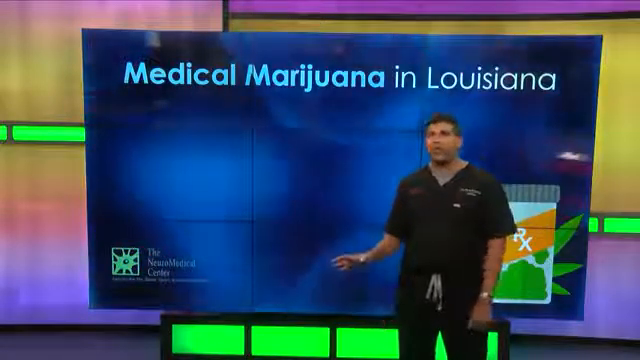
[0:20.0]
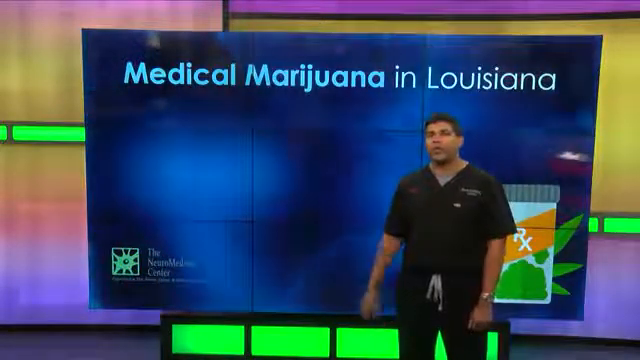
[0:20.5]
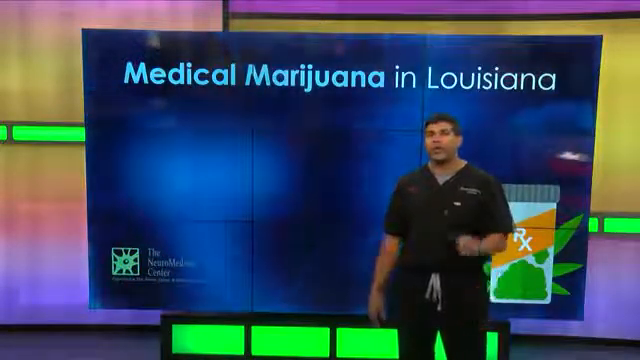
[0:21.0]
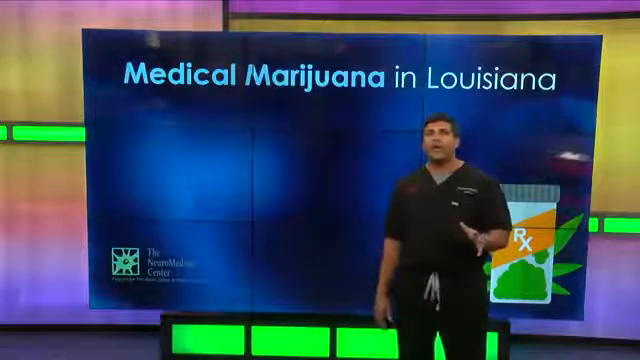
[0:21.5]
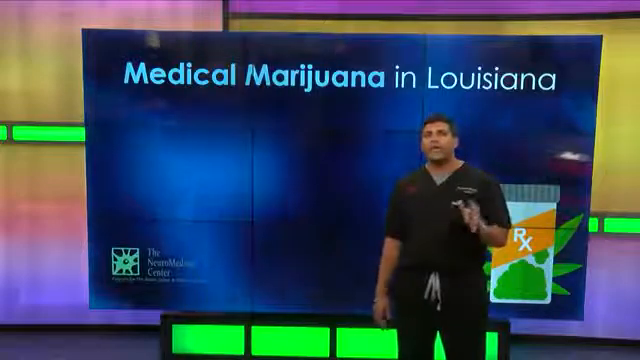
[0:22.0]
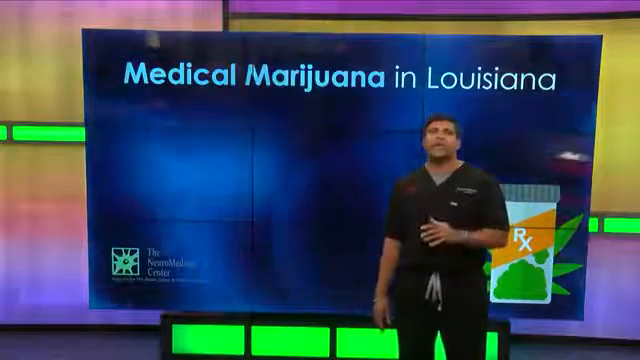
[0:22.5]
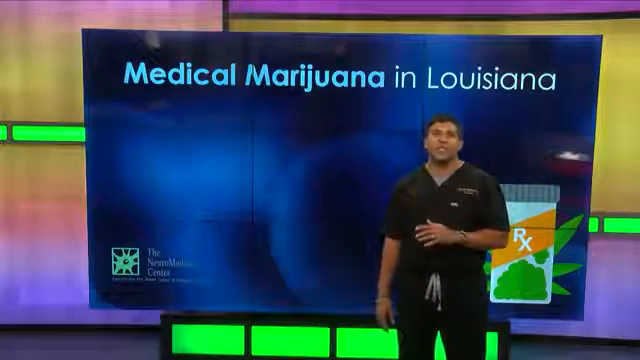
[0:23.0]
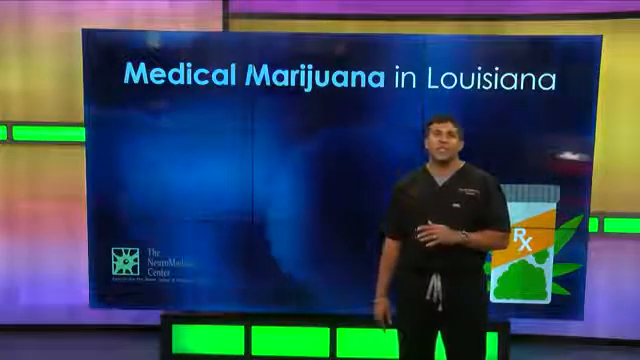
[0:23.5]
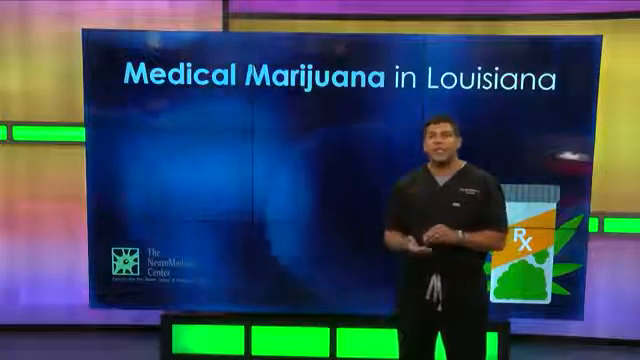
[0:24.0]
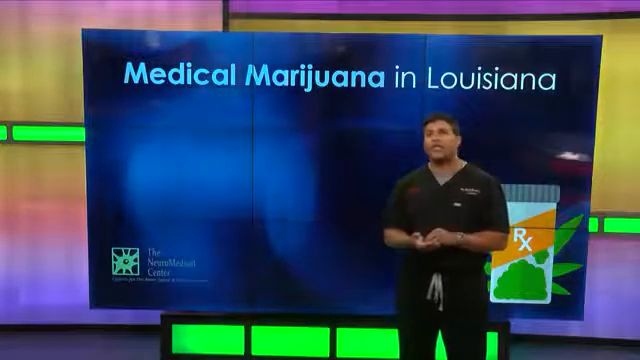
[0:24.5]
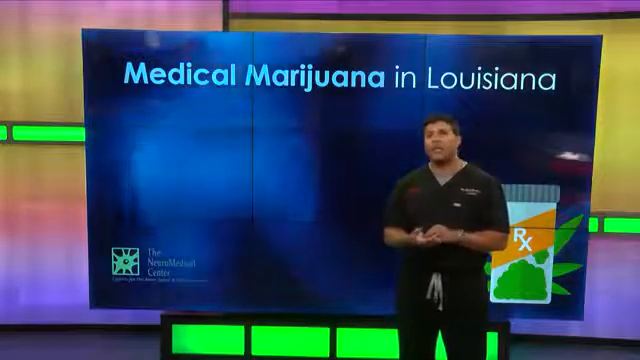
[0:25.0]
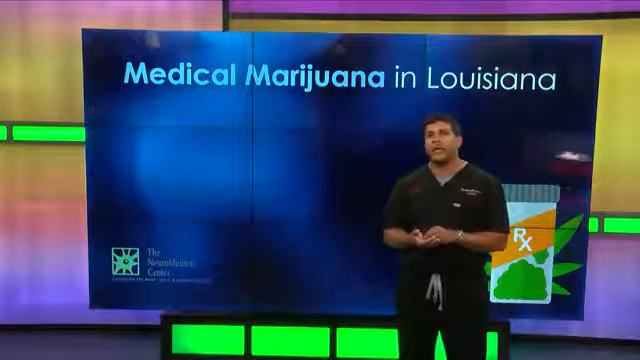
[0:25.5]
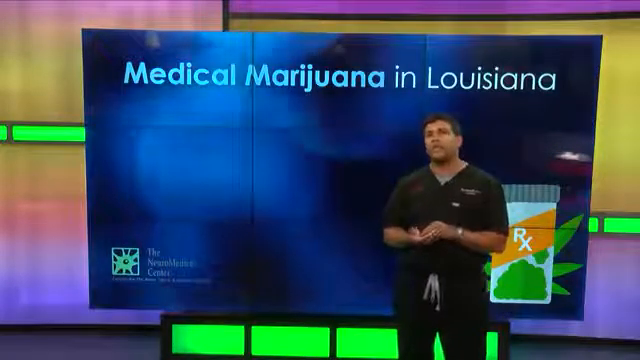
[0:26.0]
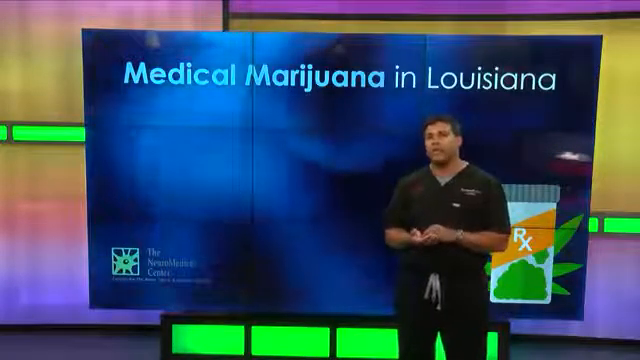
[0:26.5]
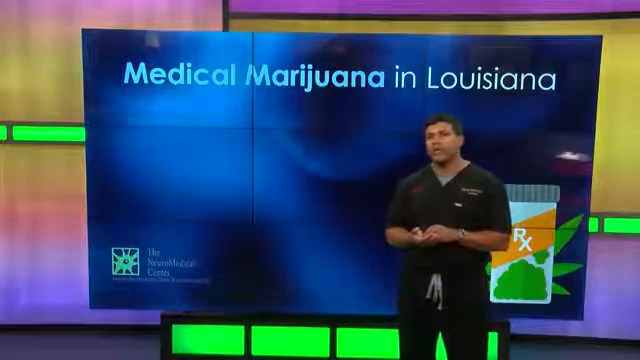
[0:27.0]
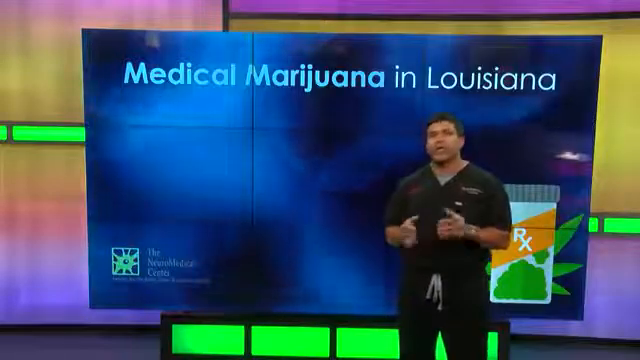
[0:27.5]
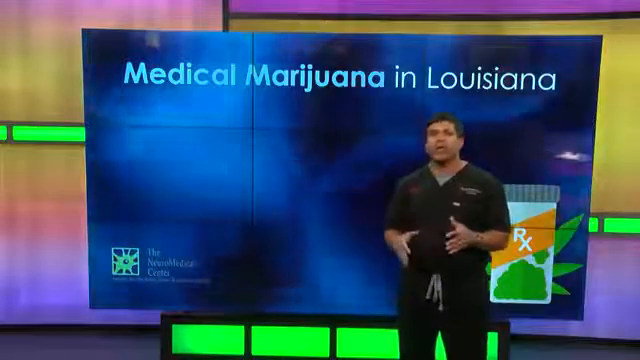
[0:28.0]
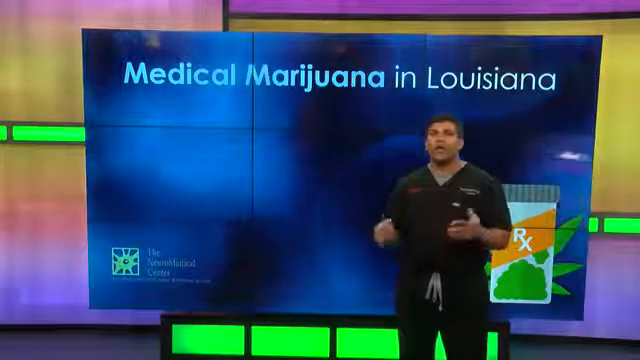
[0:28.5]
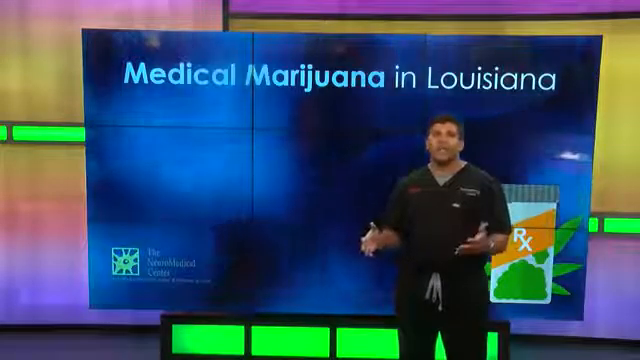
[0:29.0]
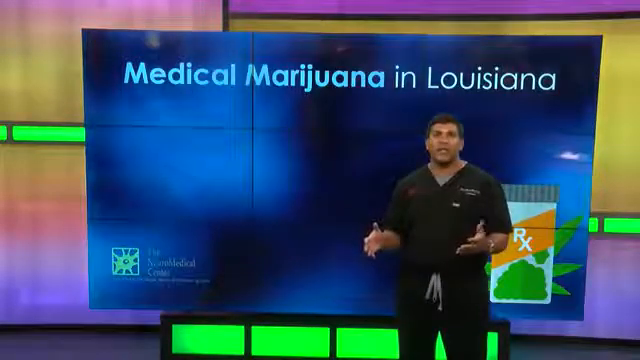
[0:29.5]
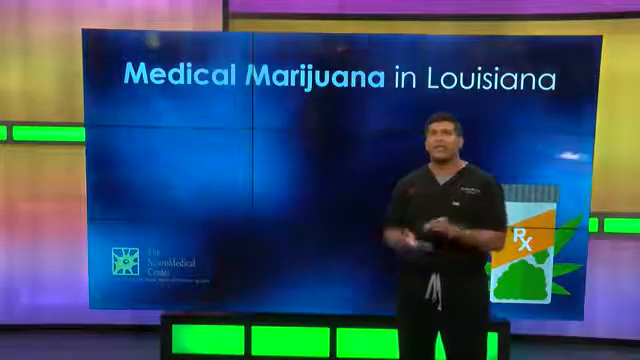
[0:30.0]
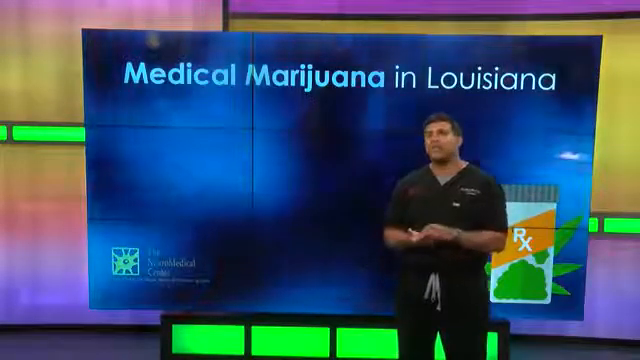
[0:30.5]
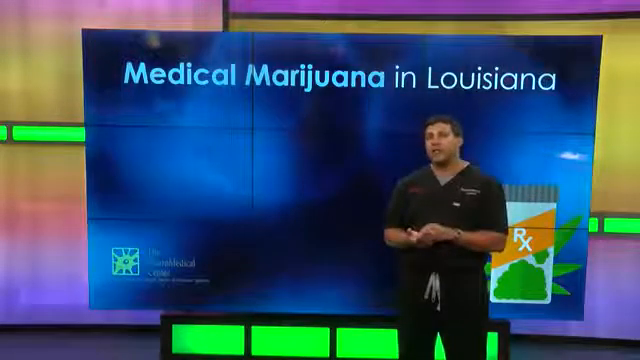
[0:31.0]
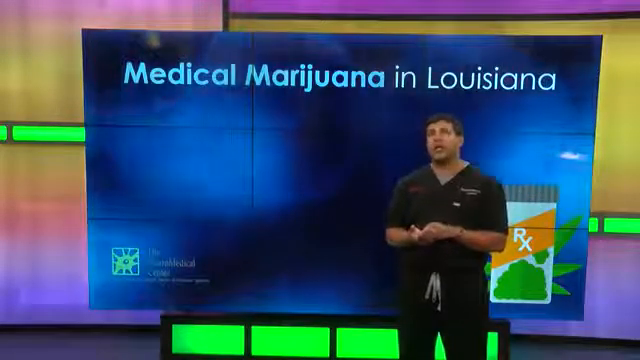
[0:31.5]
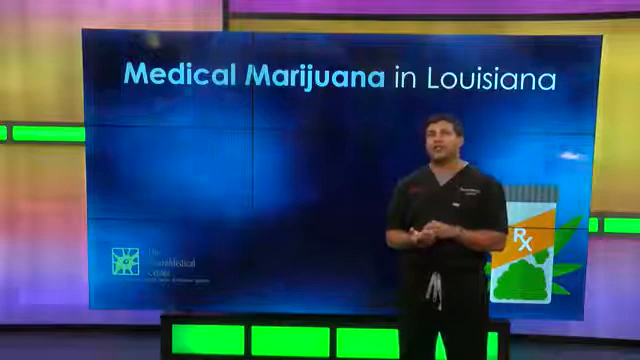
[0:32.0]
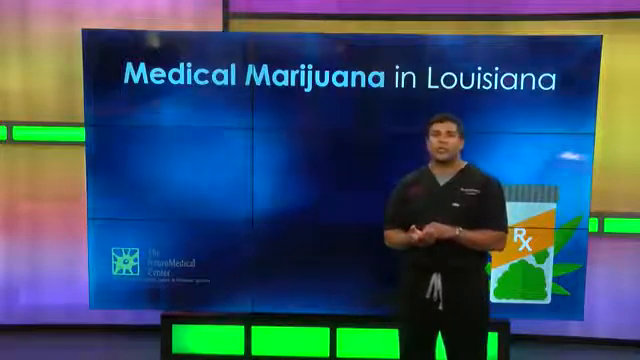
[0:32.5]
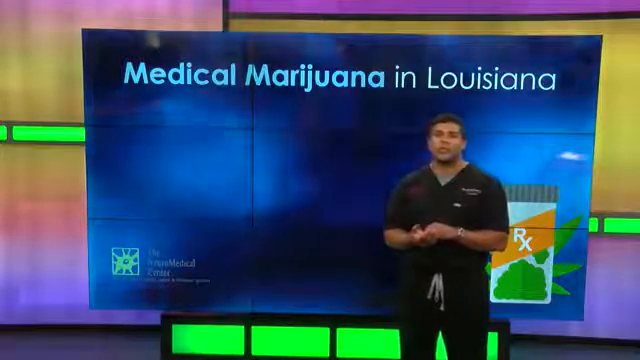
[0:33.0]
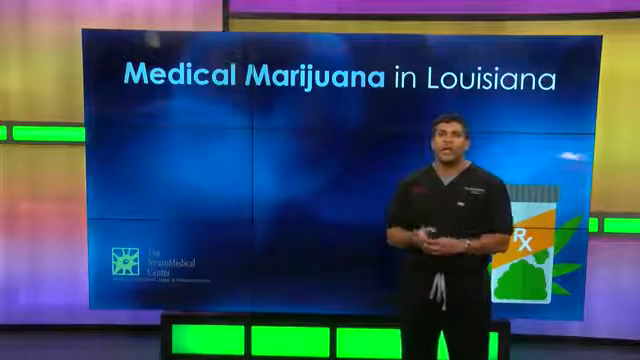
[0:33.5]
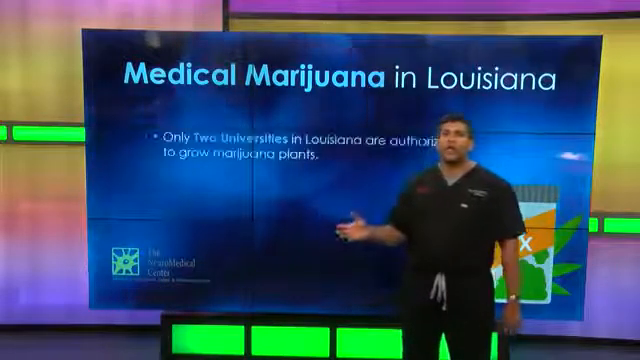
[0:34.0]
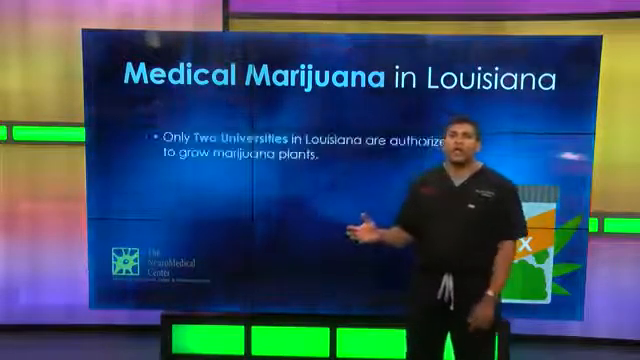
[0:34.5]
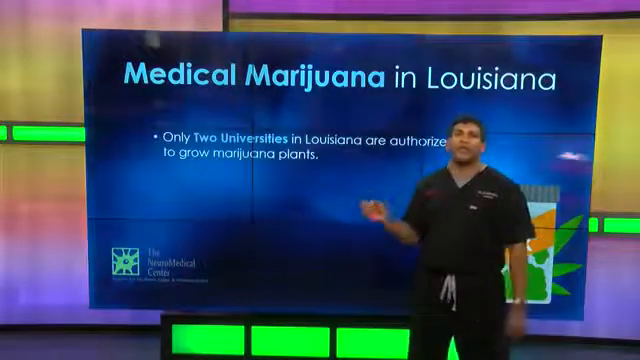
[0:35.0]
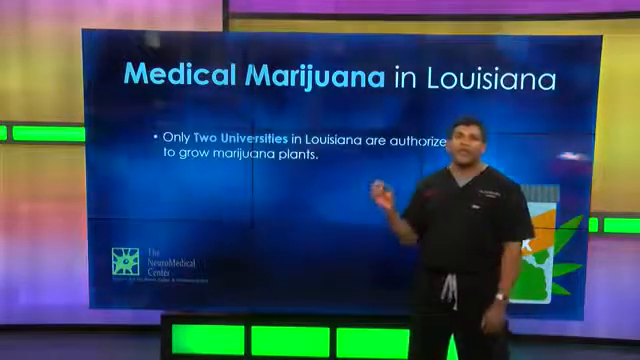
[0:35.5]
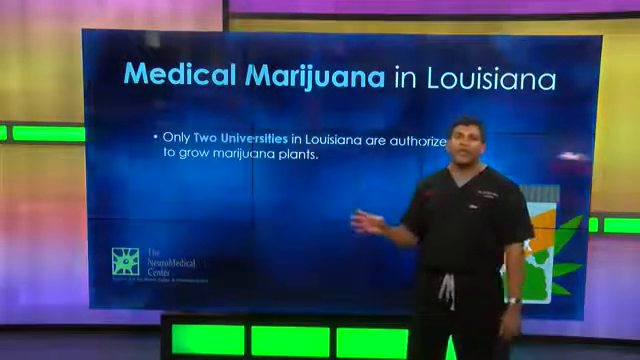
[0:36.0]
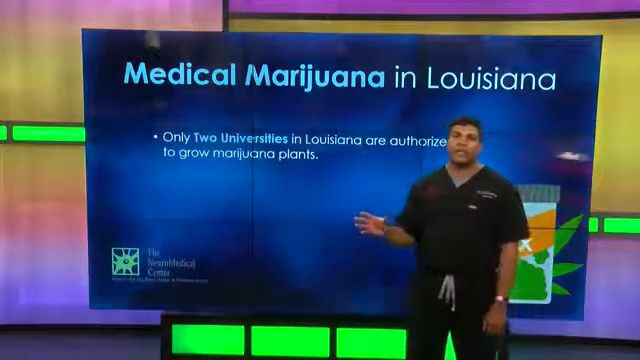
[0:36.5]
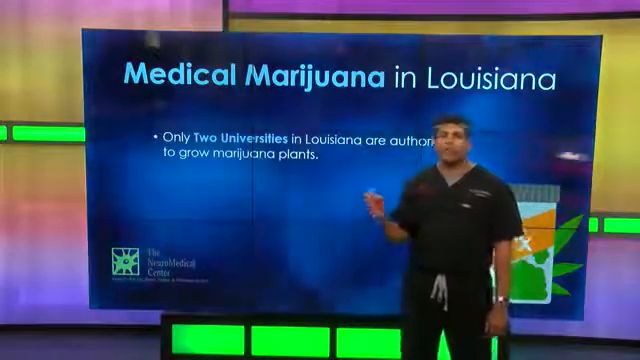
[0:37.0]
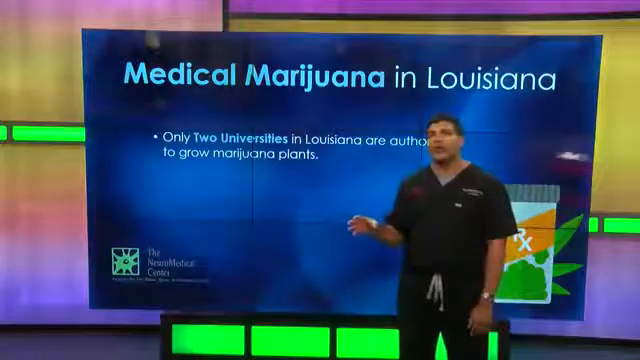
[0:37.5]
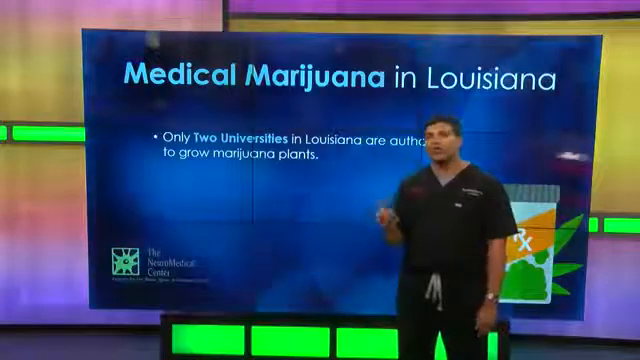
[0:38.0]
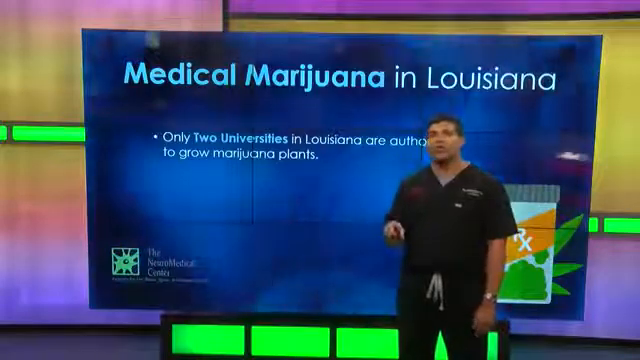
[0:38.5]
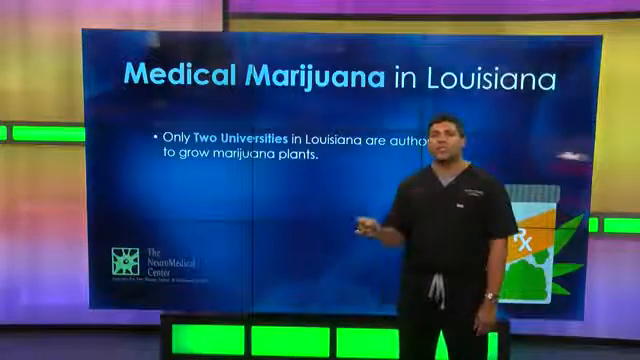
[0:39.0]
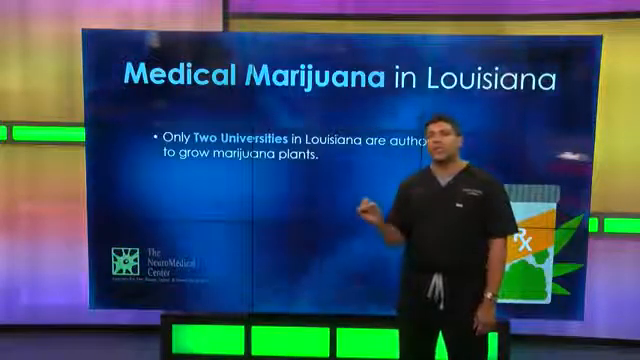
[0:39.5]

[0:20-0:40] In a newsroom there are two screens. The one in the back has pastel colors such as lavender, purple, pale green and neon green. The one in front of it is a bit smaller, steel blue with a sort of lighter blue glow. The words on it read "medical marijuana in Louisiana." At its bottom right is a pill bottle with the RX symbol on it, and at the bottom left is a logo for the Neuromedical Center. A medical doctor stands in front of the screen, wearing black scrubs with red and white writing on the upper chest and a wristwatch. His hair is cut short, and he appears to be in his 30s. He taps his right hand with his left hand as he makes points while speaking. As he speaks, bullet points appear on the front screen behind him, followed by text about medical marijuana.